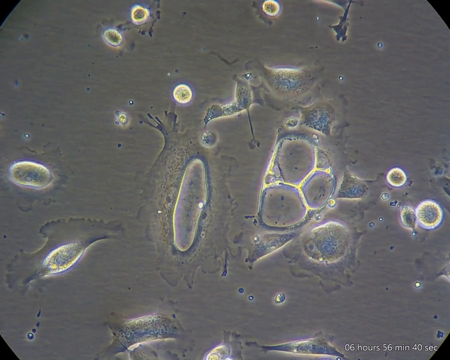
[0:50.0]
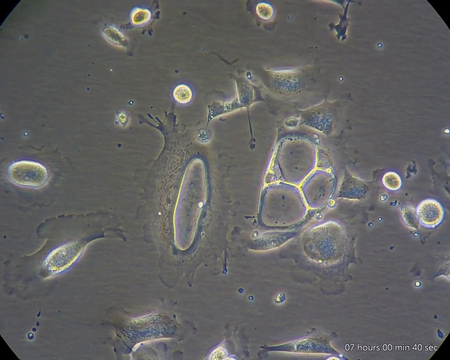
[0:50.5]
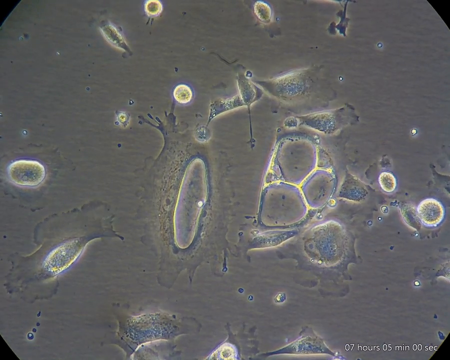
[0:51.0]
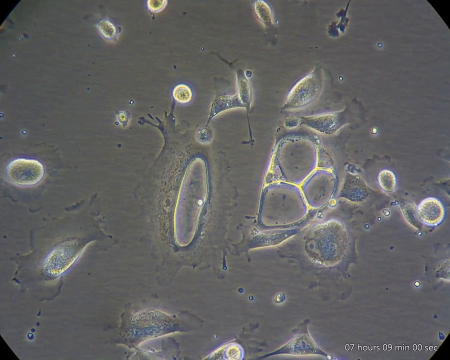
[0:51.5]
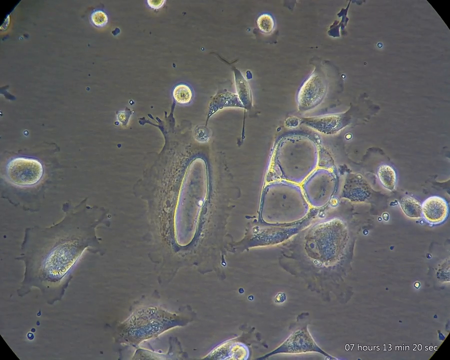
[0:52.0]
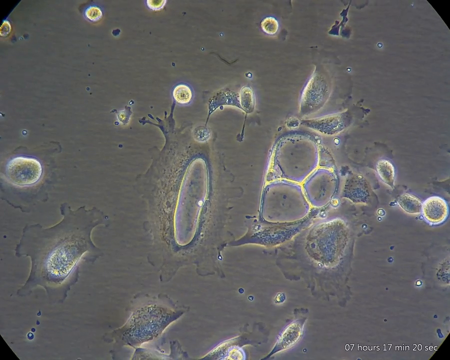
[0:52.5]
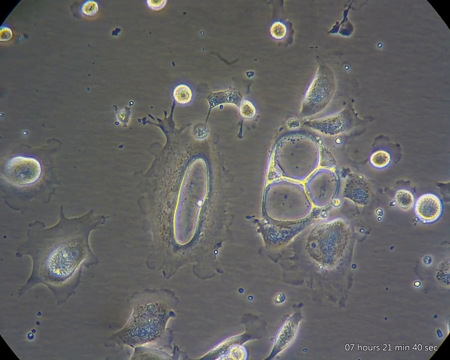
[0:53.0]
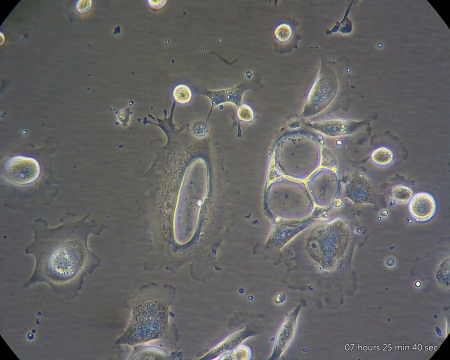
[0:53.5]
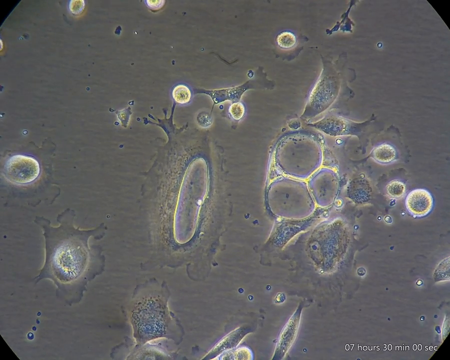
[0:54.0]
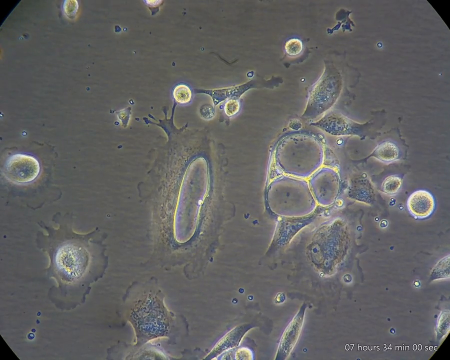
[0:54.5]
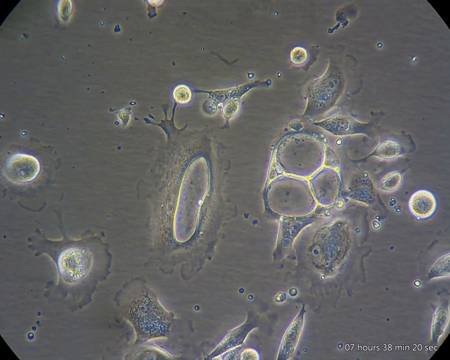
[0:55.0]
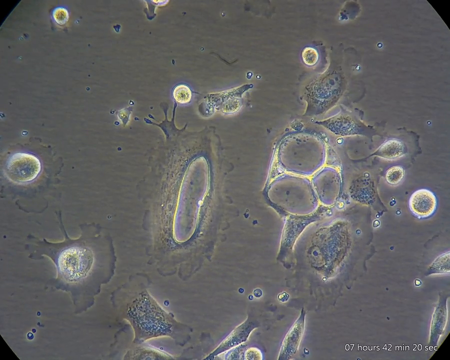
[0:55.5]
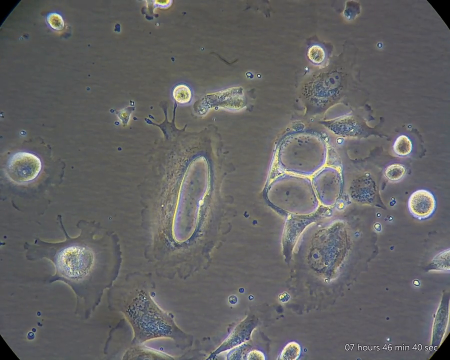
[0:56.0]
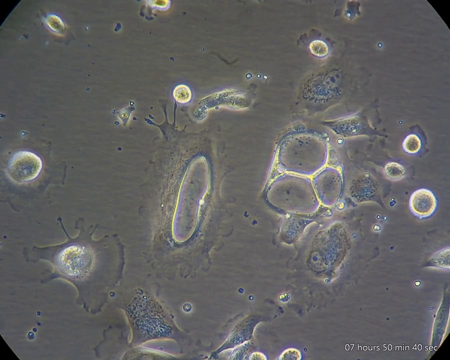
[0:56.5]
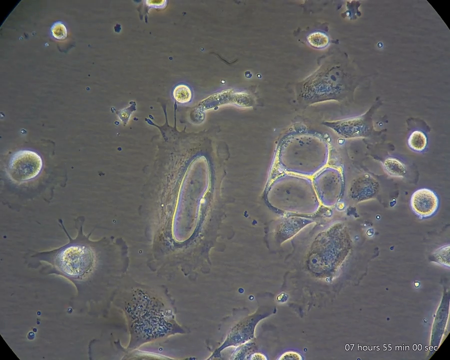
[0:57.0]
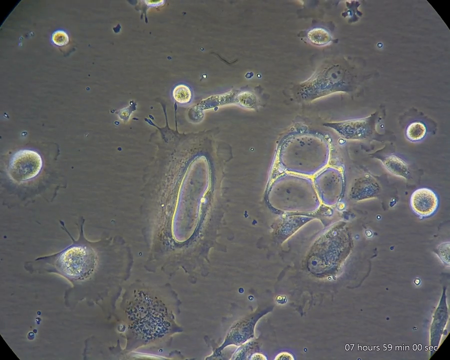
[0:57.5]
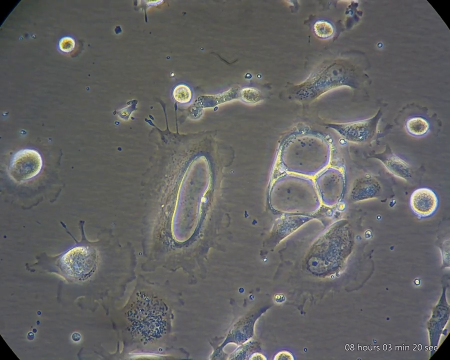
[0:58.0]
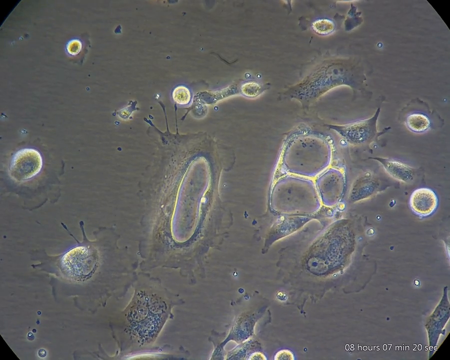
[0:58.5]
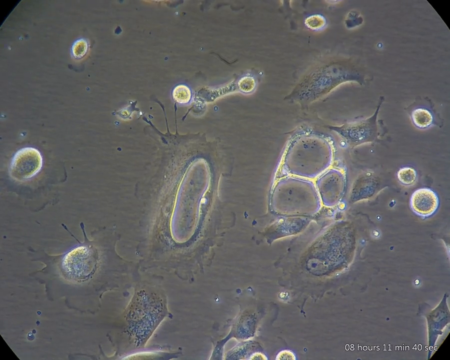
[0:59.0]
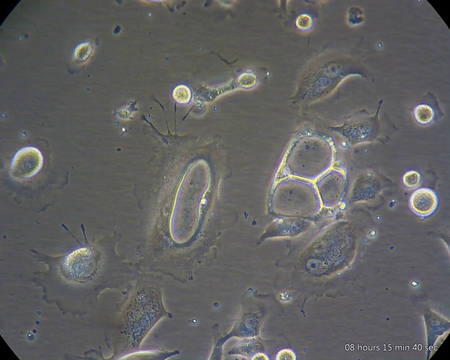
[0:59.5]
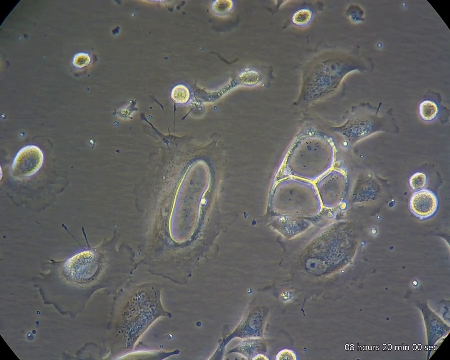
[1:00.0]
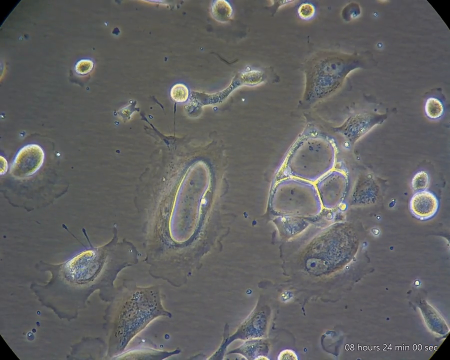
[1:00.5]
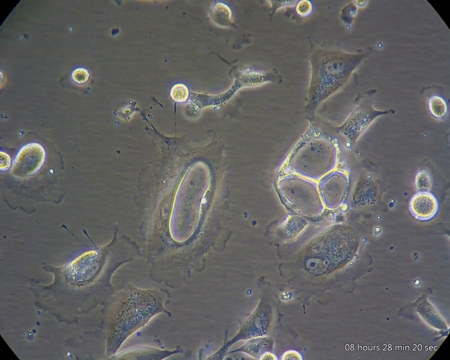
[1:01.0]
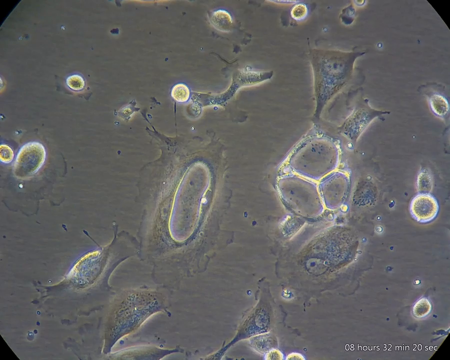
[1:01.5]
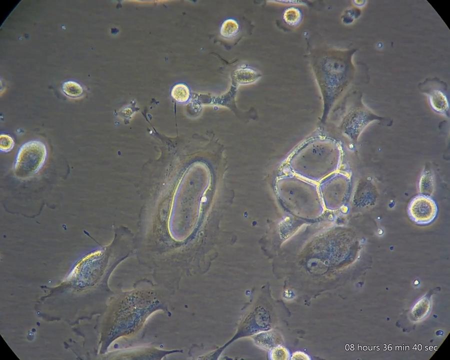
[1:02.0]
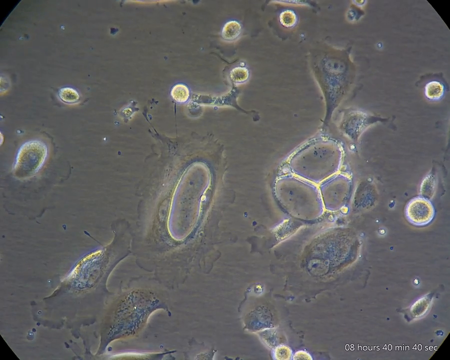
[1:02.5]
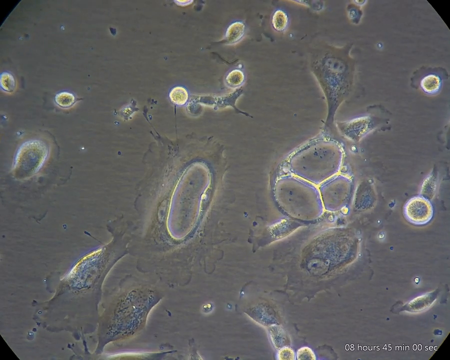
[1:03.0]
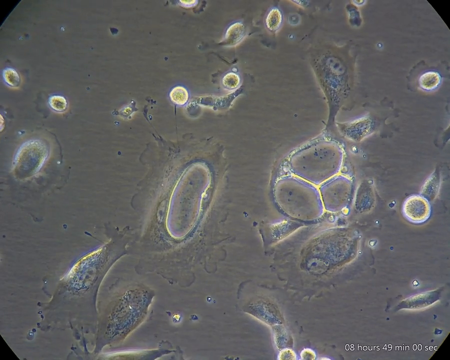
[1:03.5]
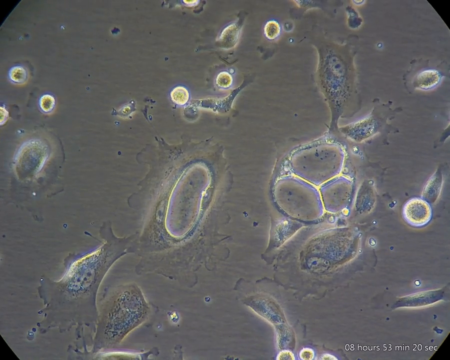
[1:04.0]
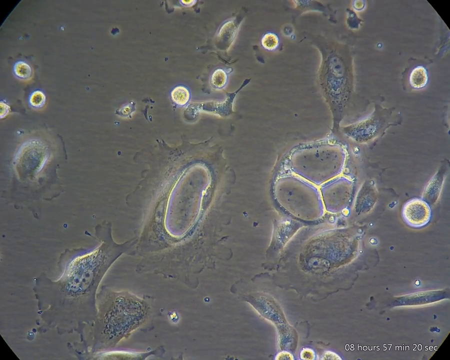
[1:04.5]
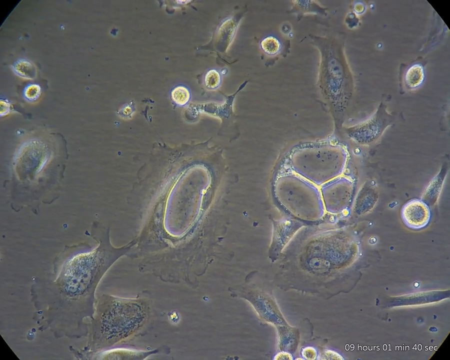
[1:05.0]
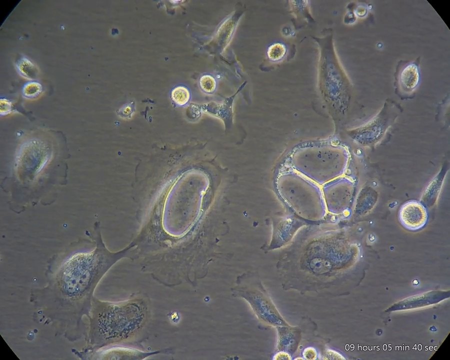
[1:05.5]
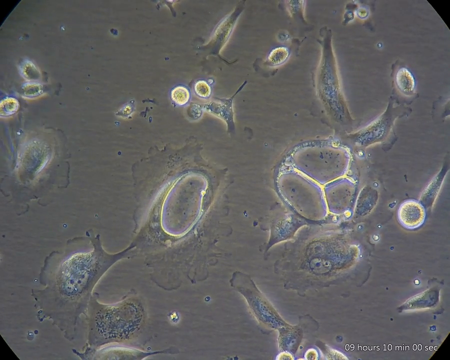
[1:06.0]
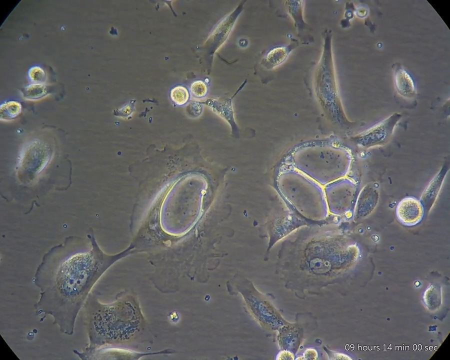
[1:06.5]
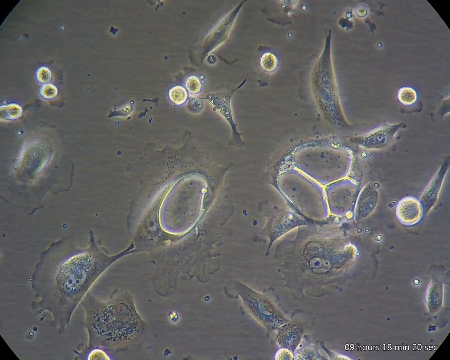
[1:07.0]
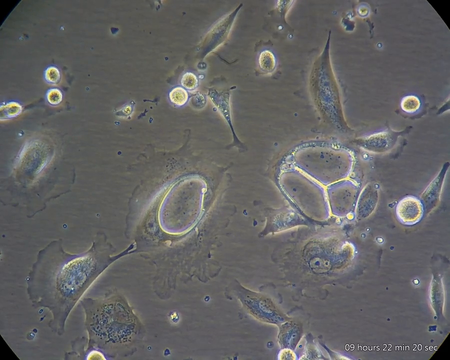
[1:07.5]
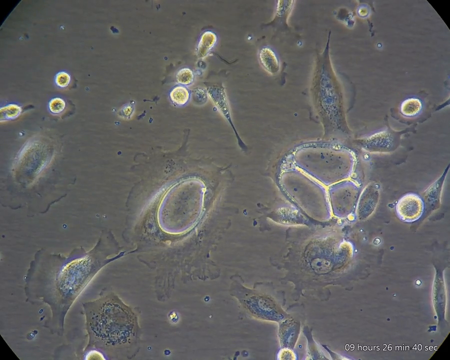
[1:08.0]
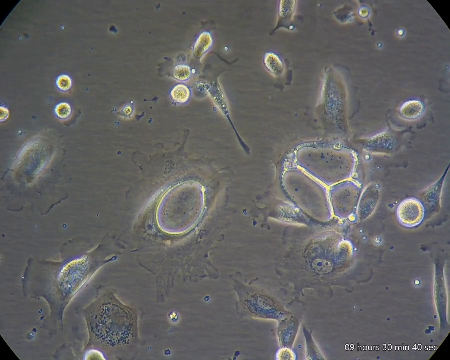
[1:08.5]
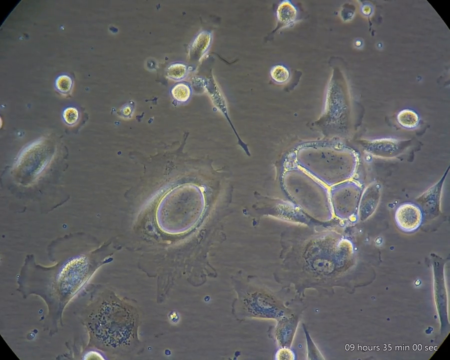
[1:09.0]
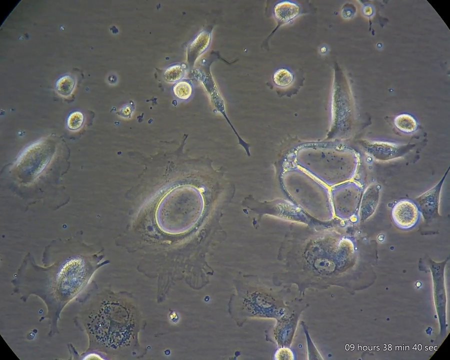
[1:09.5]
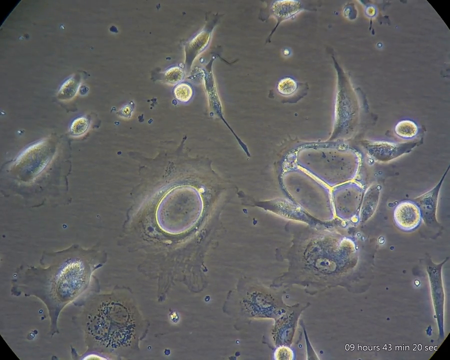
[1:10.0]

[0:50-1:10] The culture of germs and molecules is under a microscope, with some of the germs and molecules bunched closer together, especially those on the right side of the screen. There is a germ composed of three bubbles, and just outside it are other germs that are more oval in shape and uneven around the edges; these germs are trying to morph into the three-bubble germ. Other germs are perfectly circular, very bright, neon-like and green, and are not moving very fast. In the background, very small germs or molecules move faster. Various other long-shaped molecules or germs move very fast across the screen at times, while some of them stay in the background.